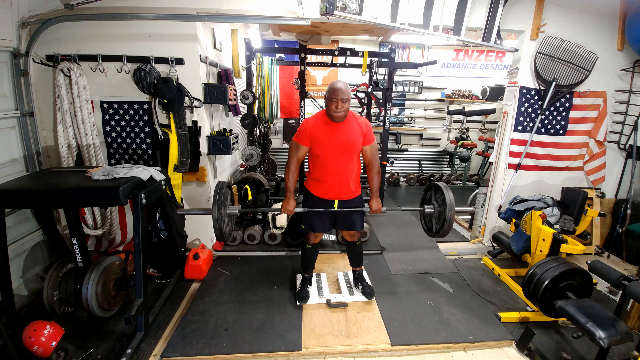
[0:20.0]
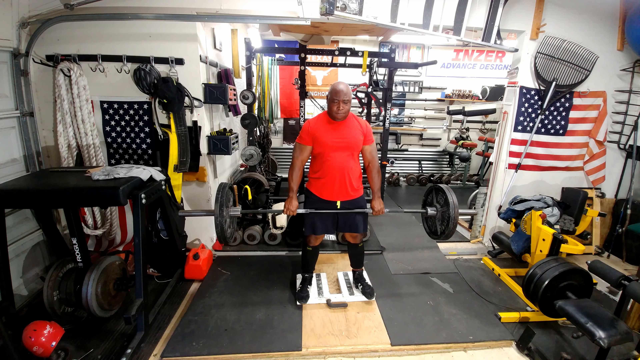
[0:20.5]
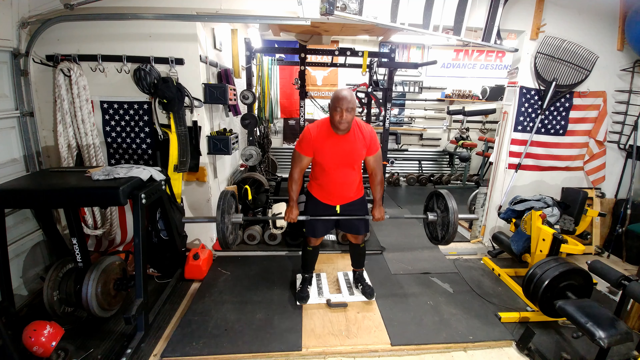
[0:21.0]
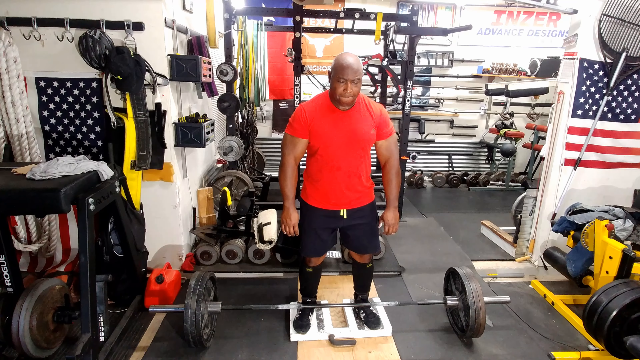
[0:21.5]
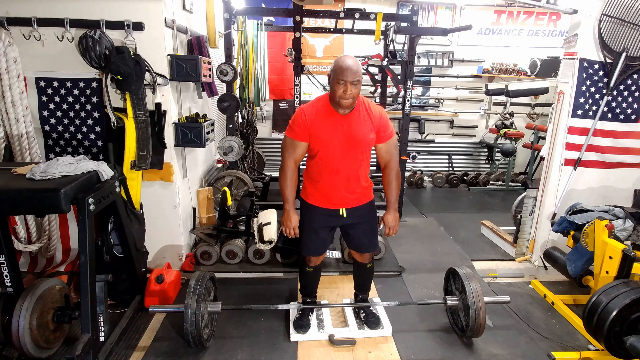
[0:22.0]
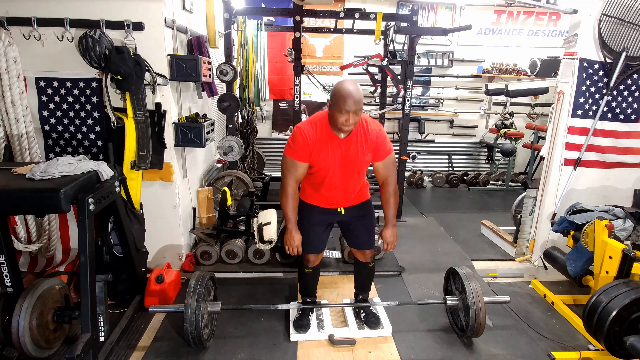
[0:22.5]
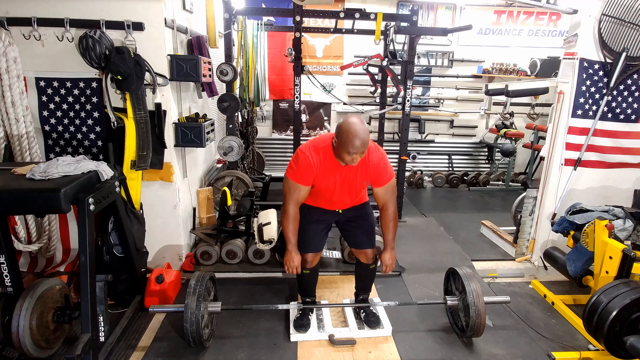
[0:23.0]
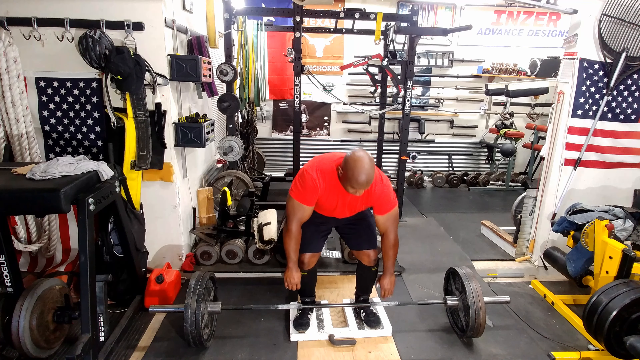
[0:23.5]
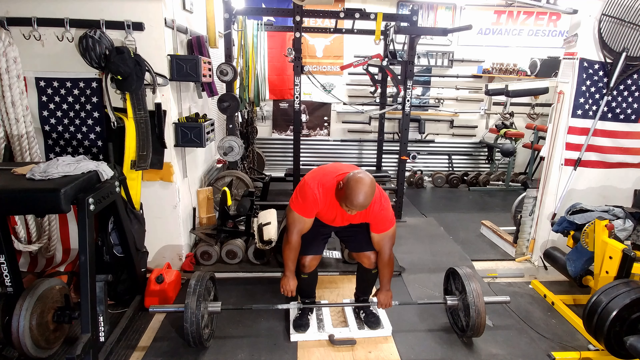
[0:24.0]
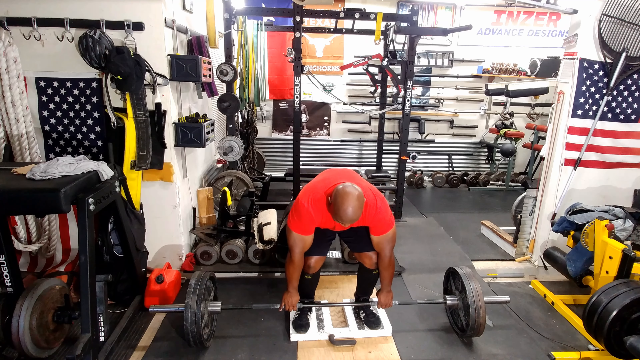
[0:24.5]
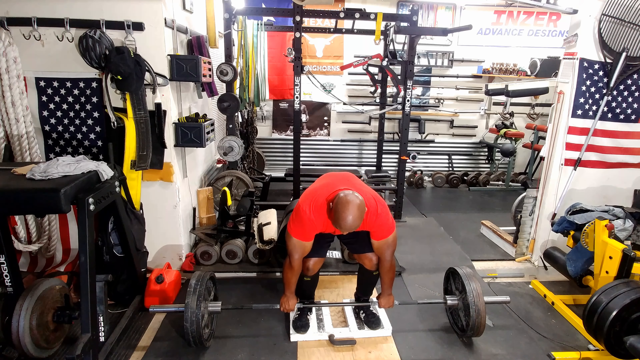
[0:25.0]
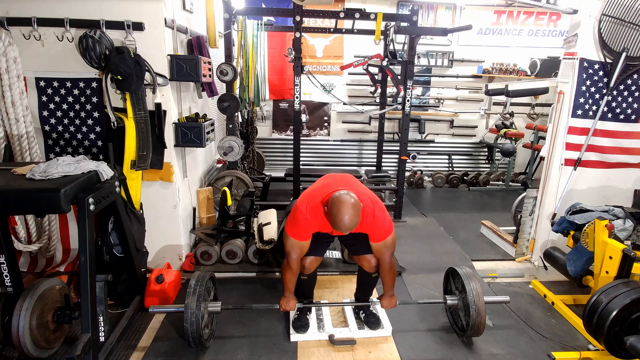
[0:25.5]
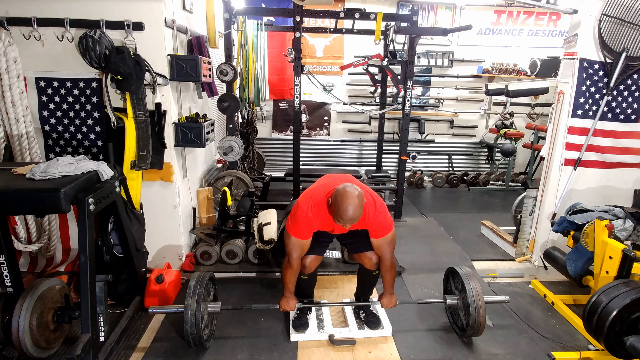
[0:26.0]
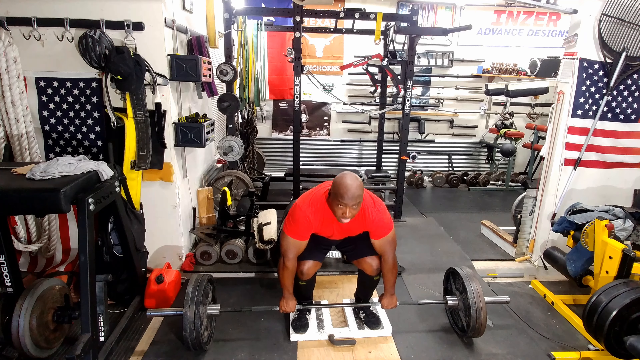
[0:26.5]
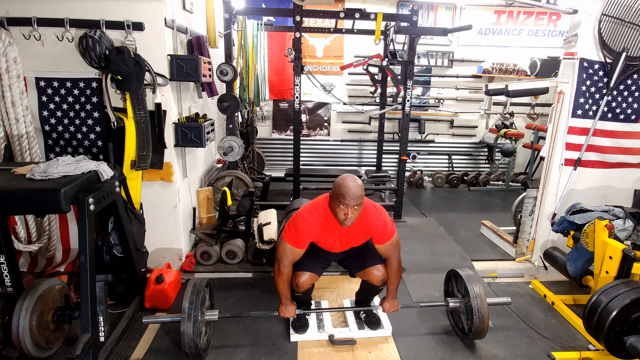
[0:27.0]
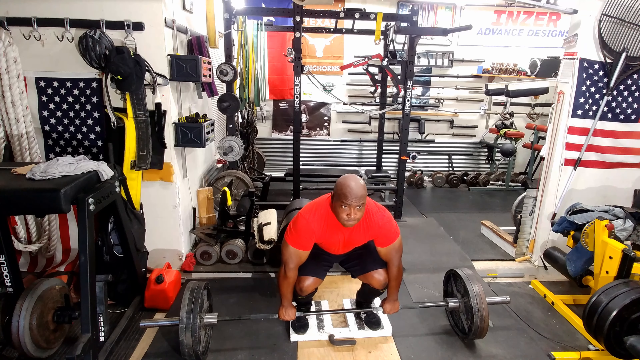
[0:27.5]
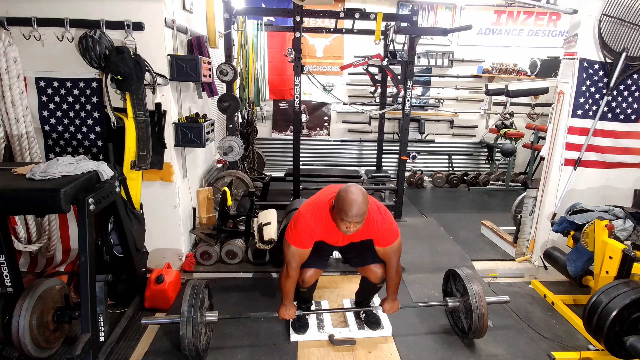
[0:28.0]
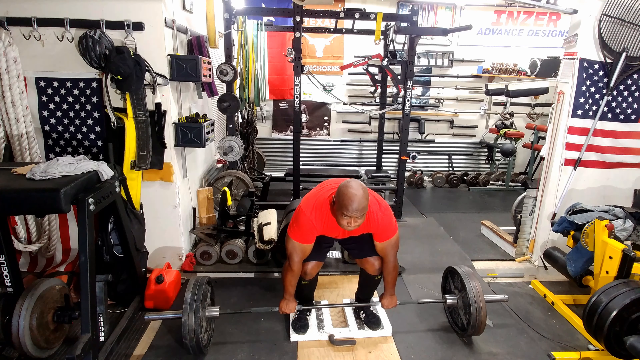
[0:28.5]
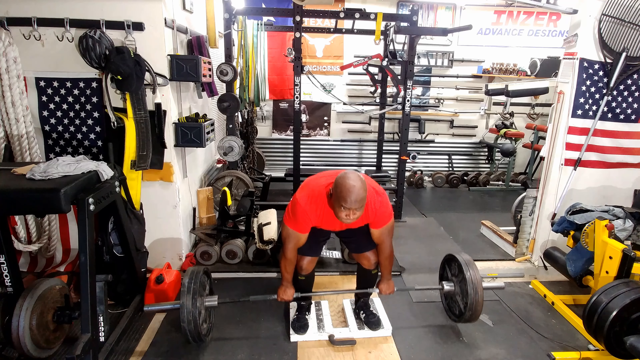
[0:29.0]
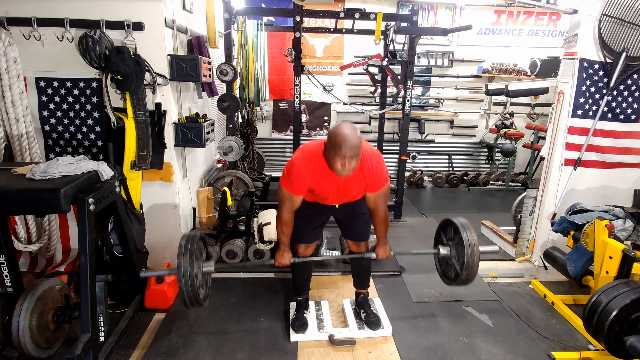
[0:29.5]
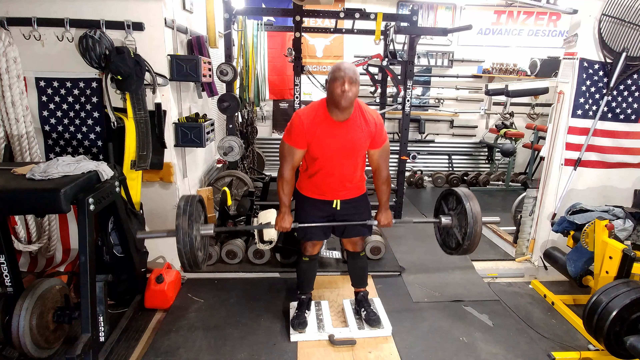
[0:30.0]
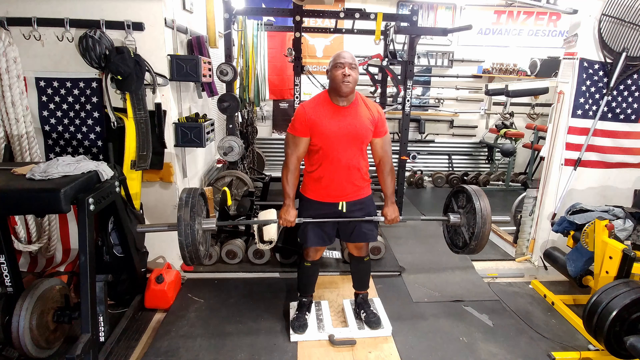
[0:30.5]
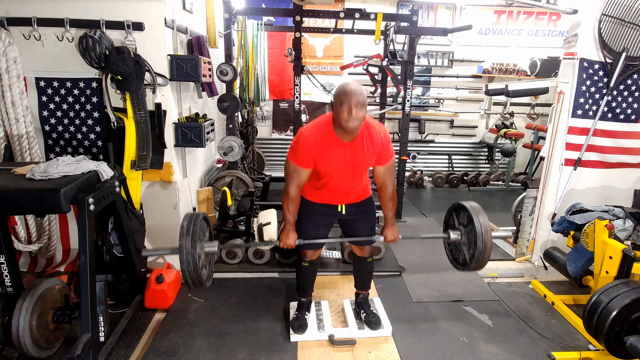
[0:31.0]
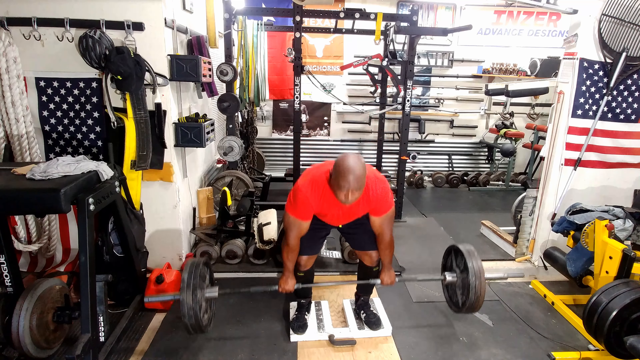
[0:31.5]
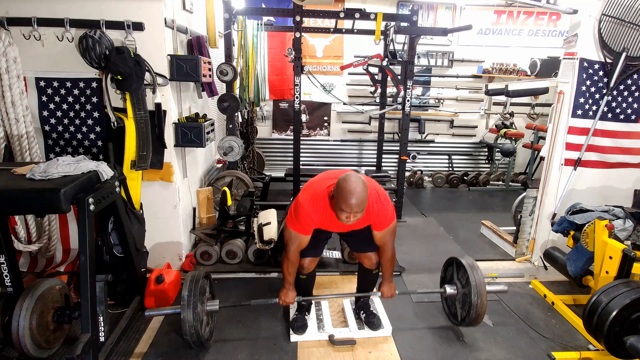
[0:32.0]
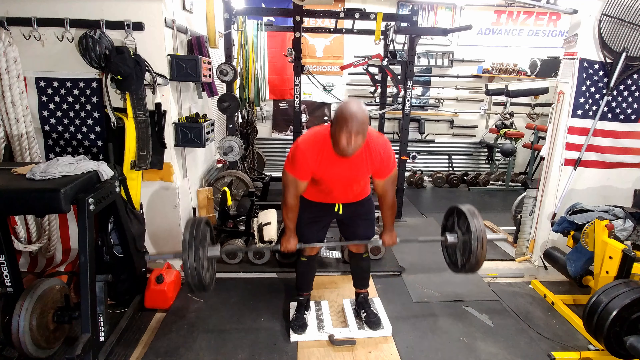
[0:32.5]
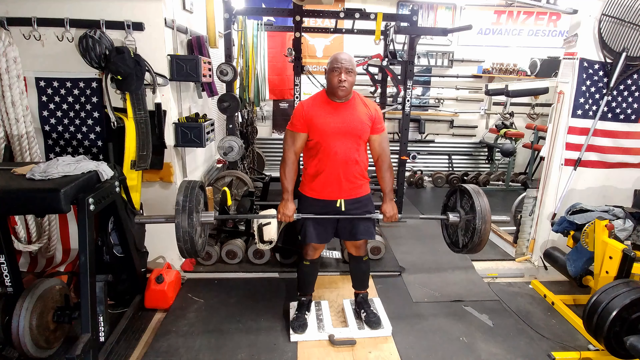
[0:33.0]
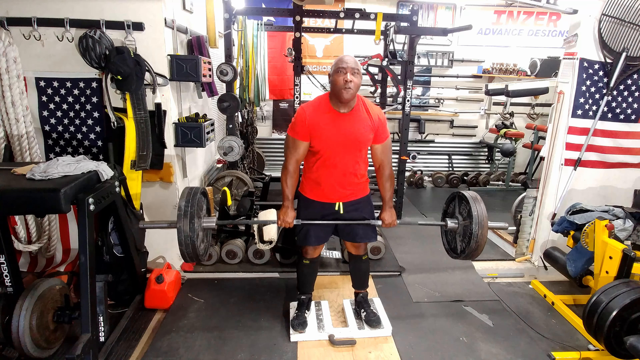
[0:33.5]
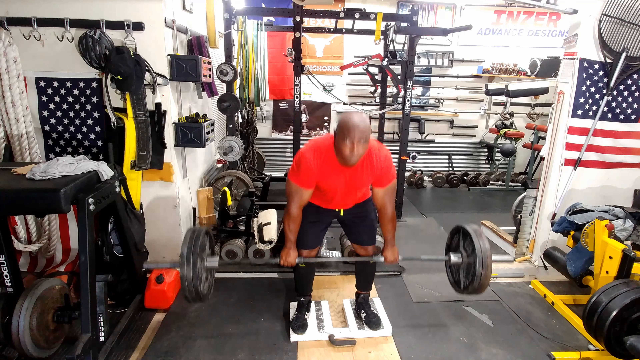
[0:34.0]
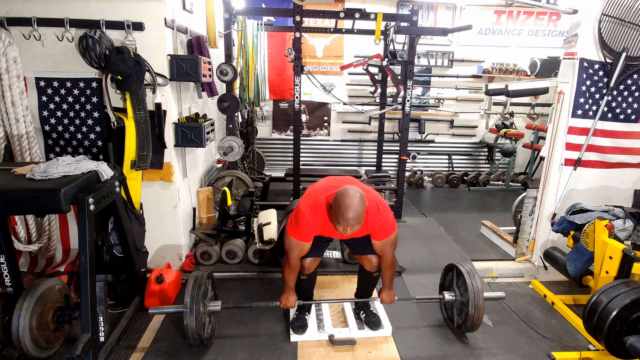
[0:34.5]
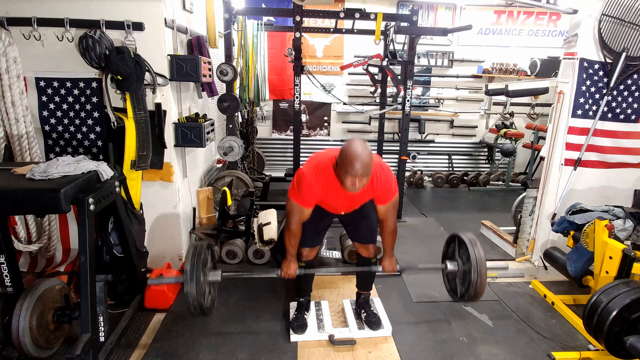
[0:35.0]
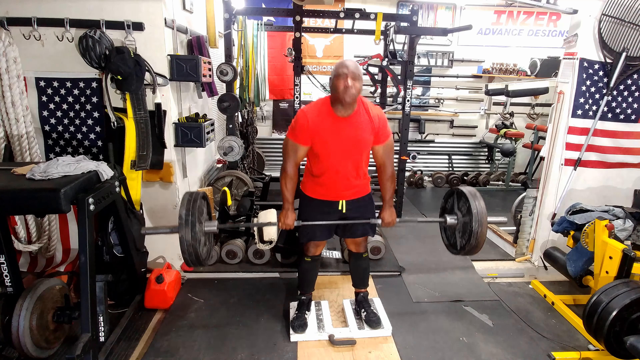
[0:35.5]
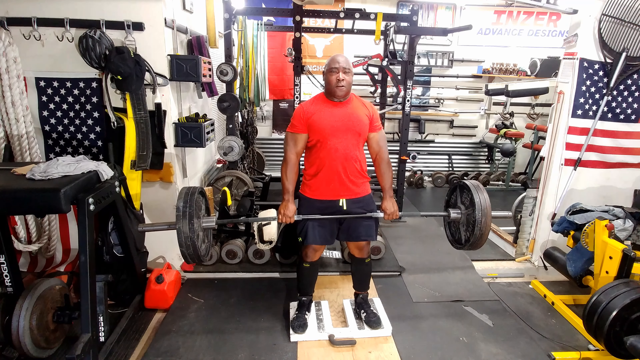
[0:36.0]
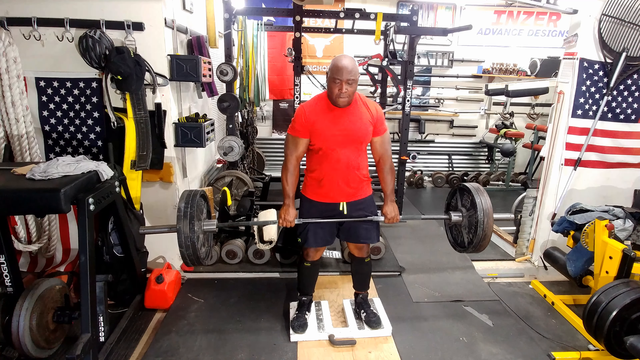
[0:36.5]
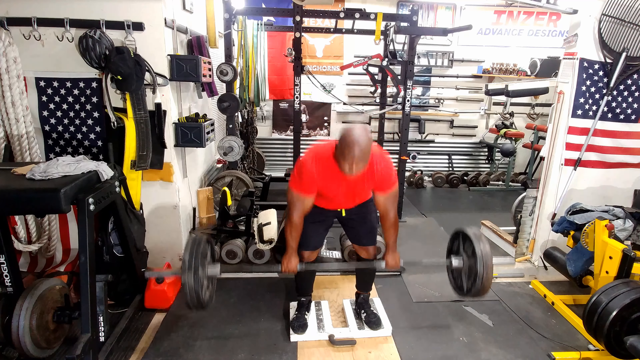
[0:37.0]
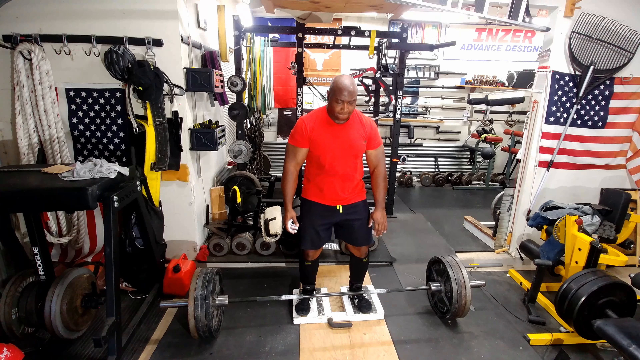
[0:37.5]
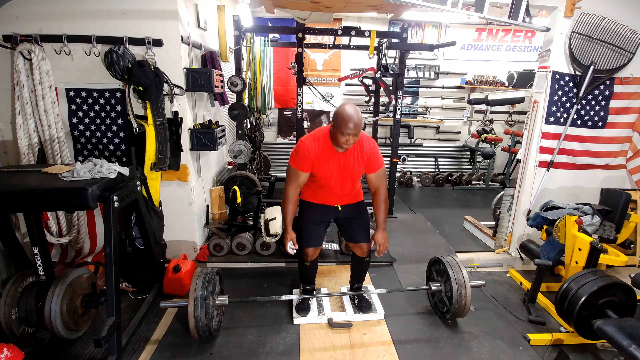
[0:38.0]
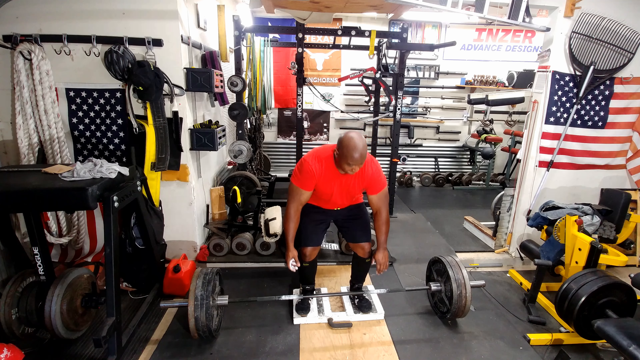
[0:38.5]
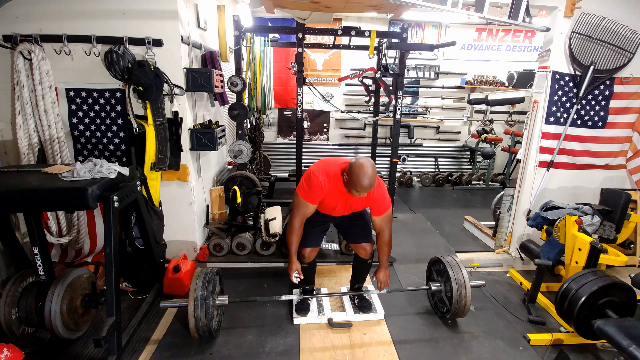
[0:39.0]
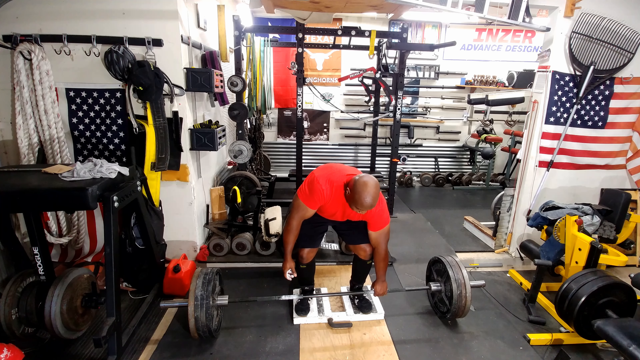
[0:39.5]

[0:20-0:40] The man bends over to pick up the weights. This time he appears to have more weight on each end of the bar, which is presumably made of steel or metal. The weights are circular and grayish black. He wraps his fingers around the bar, squeezes, and lifts, bending his back as he picks it up, straining visibly, and the video cuts. Near the end there is another cut to him lifting again, this time with white powder on his palms. He seems to be adding weight as he tries to lift the bar, and he struggles to pick it up throughout.